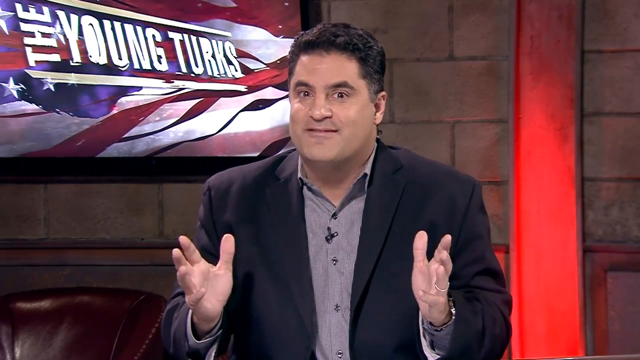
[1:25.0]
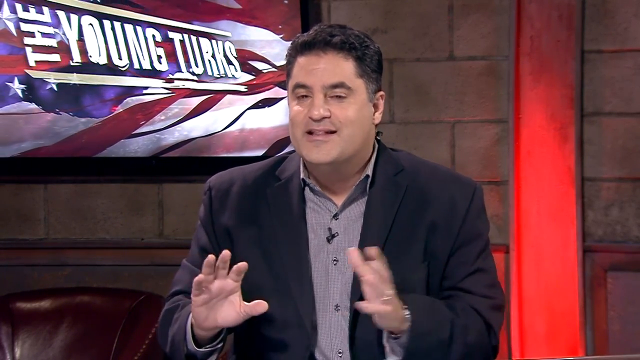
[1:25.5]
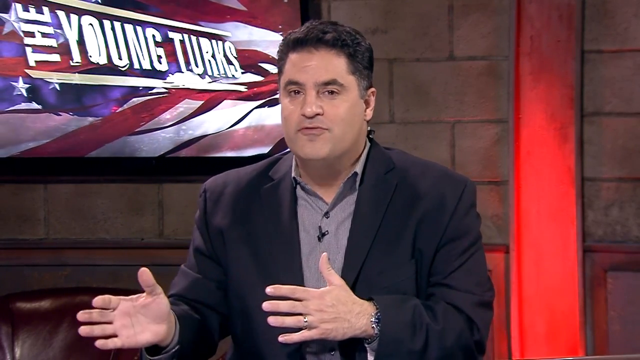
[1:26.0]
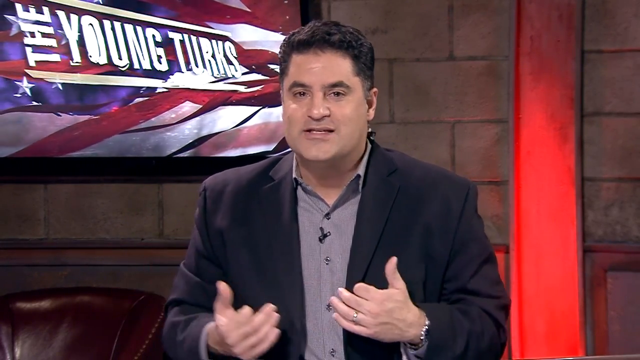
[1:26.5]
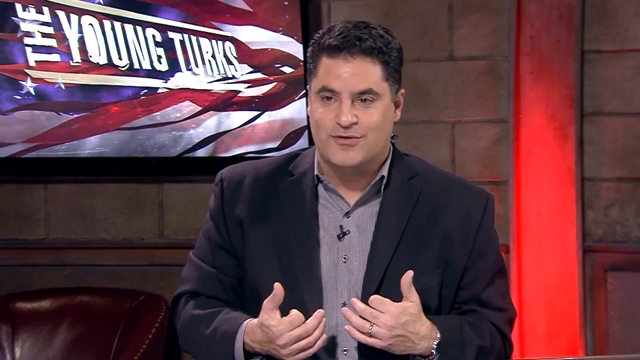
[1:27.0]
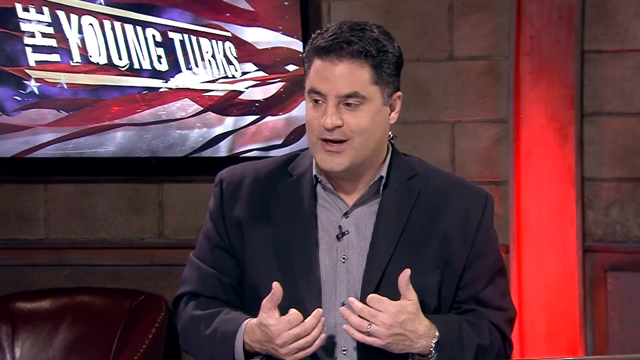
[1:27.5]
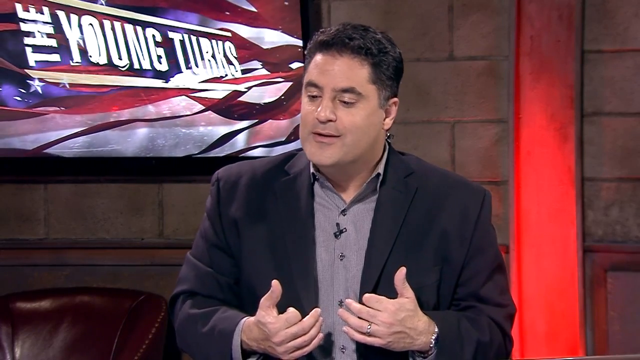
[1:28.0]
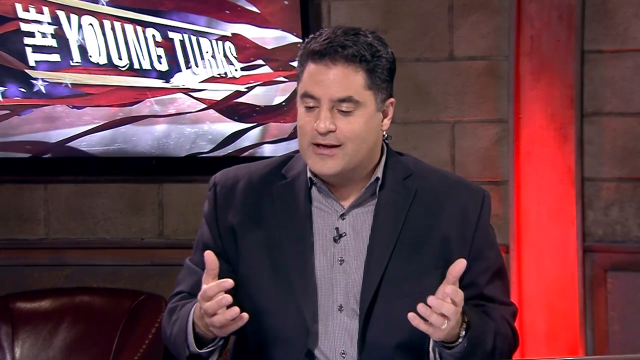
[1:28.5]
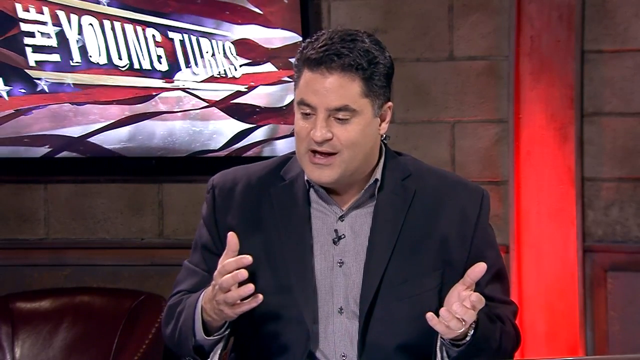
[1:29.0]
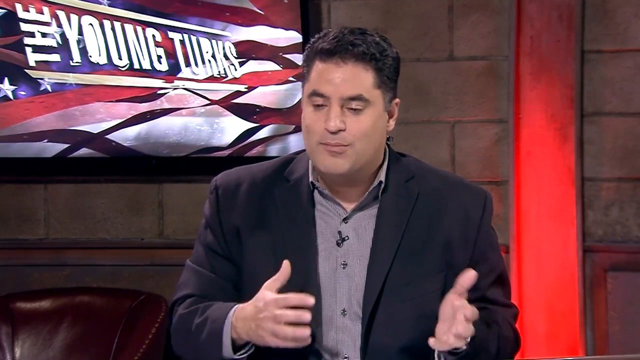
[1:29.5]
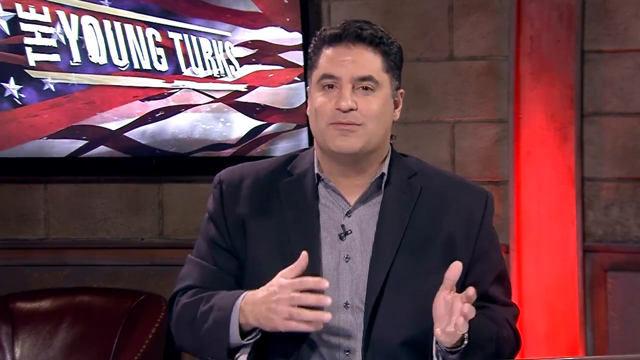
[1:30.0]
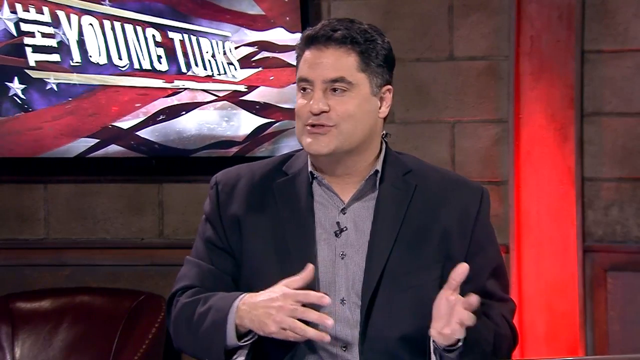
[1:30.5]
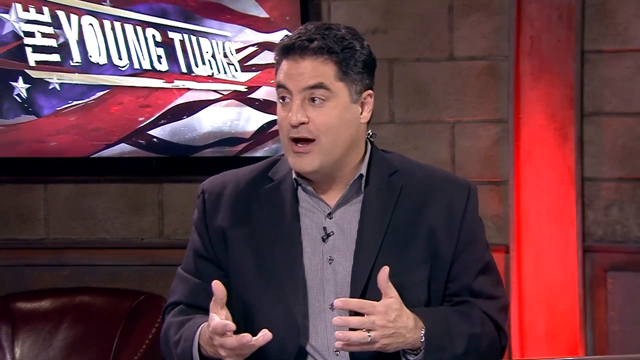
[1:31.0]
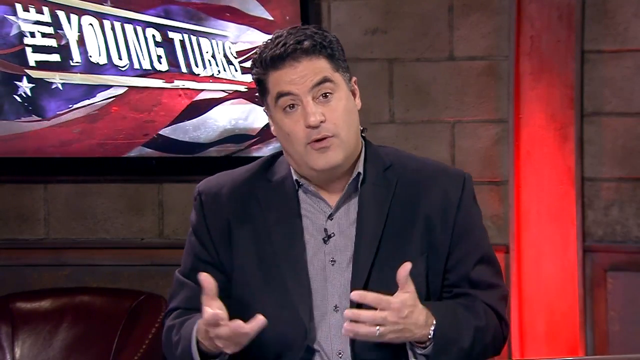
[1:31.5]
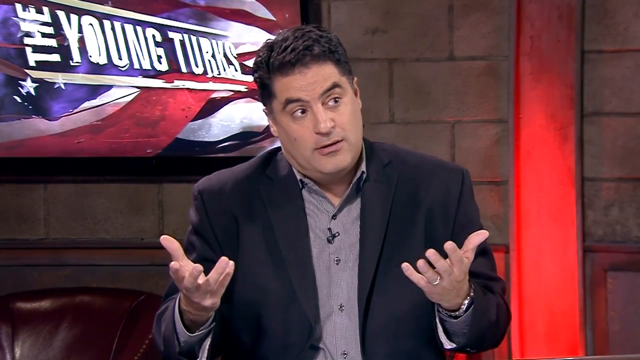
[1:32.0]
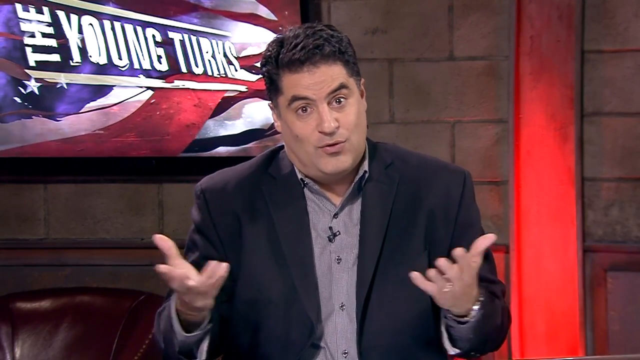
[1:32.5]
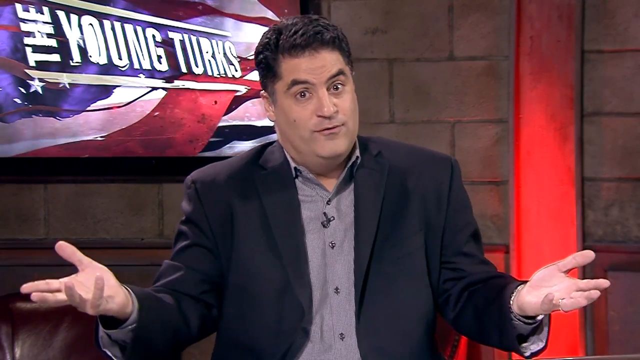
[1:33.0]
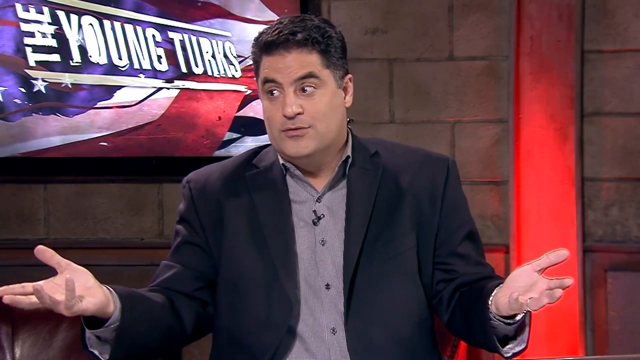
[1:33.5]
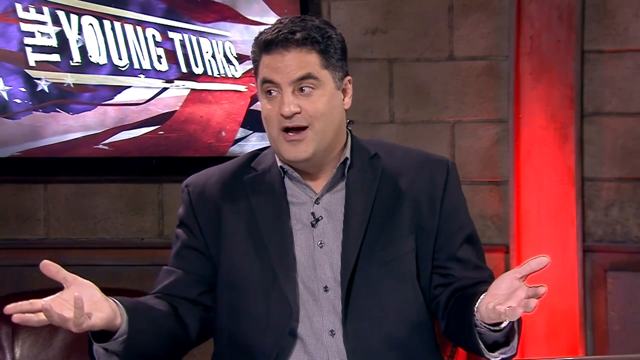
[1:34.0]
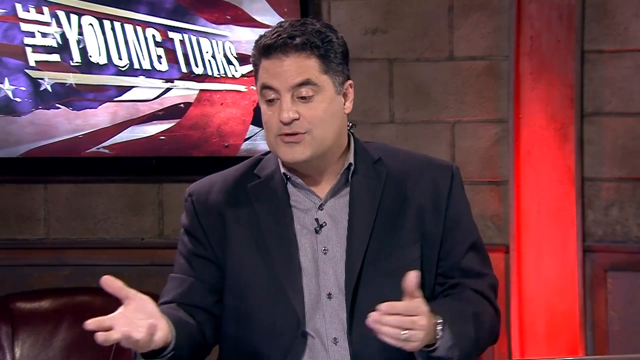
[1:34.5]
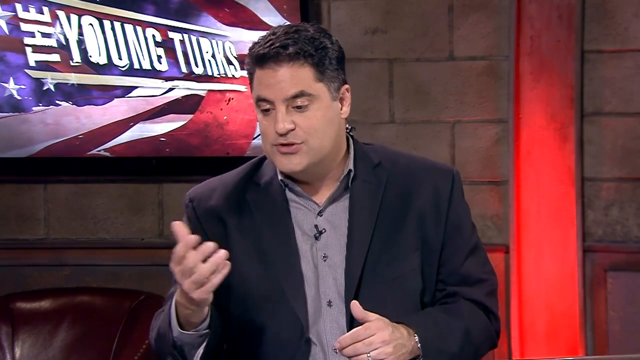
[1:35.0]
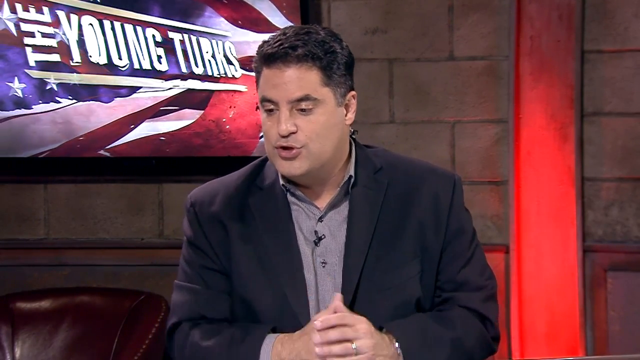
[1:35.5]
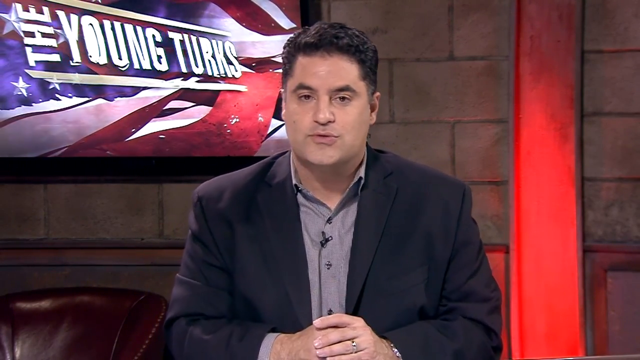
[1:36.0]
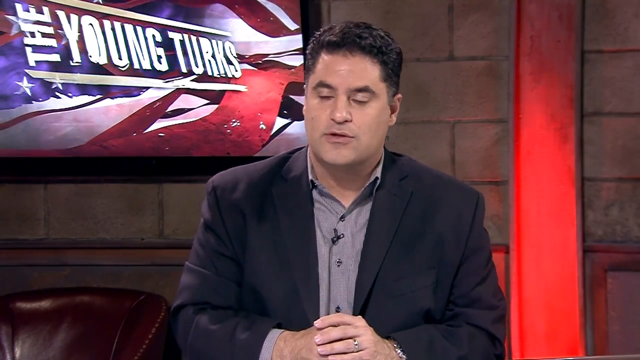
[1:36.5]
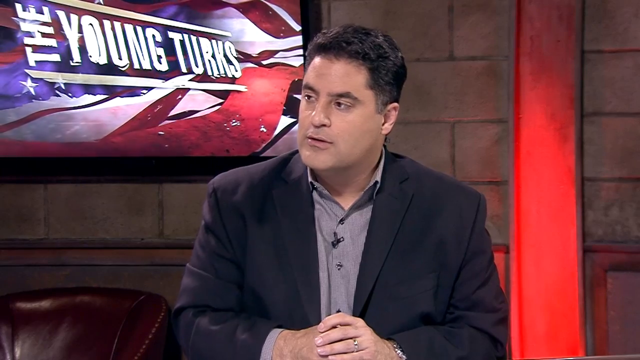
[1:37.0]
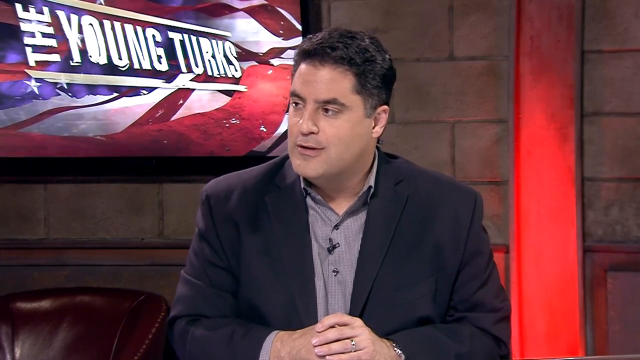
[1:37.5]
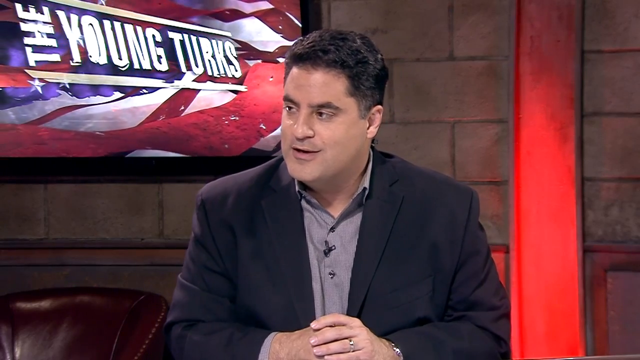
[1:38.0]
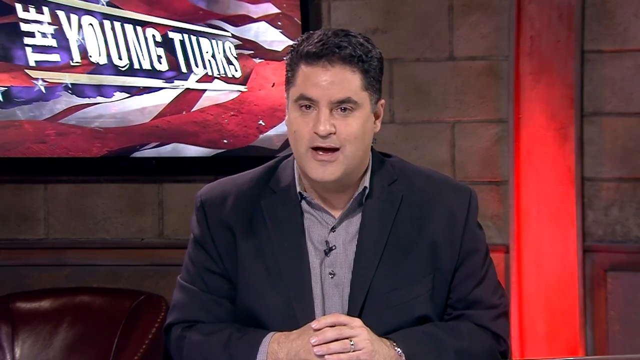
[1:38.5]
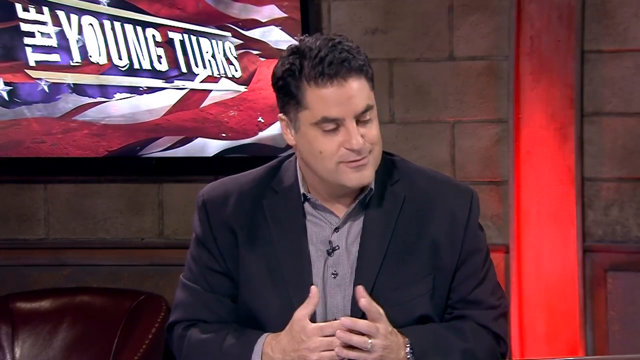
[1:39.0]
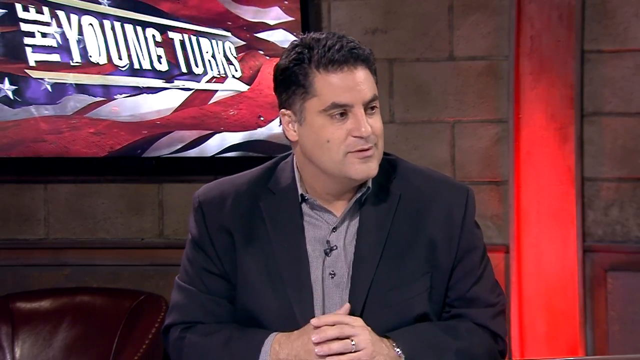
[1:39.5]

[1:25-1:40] The male reporter sits at the news desk talking, using his hands quite a bit and making many facial expressions. At one point he crosses his hands in front of him, and he shrugs while talking. A gold wedding band is visible on his left ring finger and a silver watch on his left wrist. He wears a long-sleeve light gray button-up shirt with no tie and an open dark blazer, and has styled darker hair with no facial hair. He sits at some kind of table or news desk. Smiling slightly, he looks over to the reporter next to him, raising his eyebrows and widening his eyes, somewhat emphatically. Behind him is the light brown brick wall with the corner of a TV screen that says "The Young Turks" with a flowing American flag in the background, its red and white stripes and the stars in the top part sort of moving.